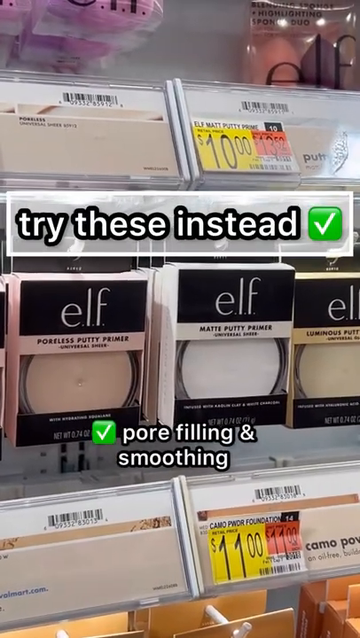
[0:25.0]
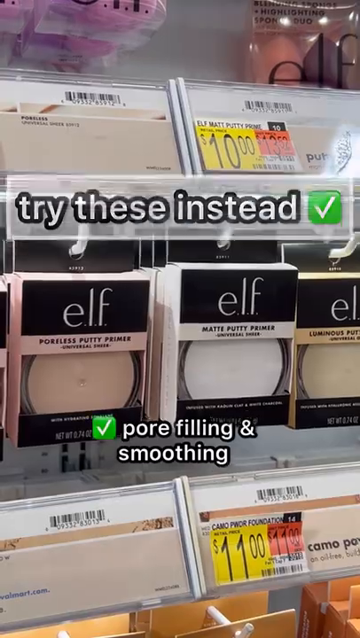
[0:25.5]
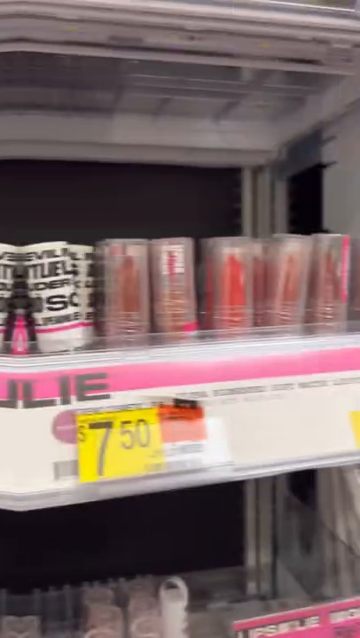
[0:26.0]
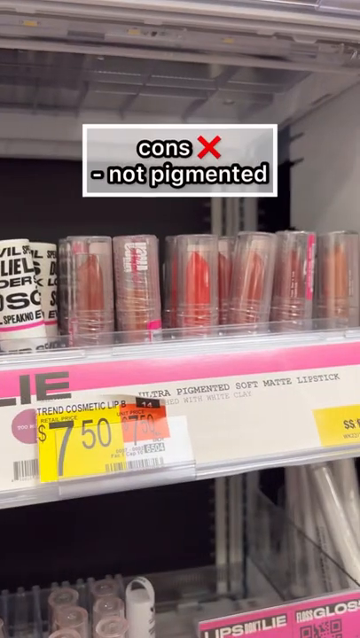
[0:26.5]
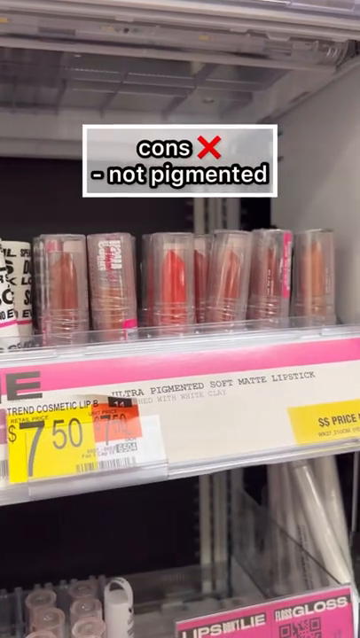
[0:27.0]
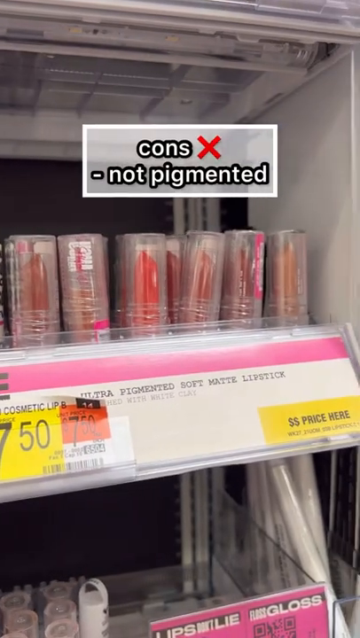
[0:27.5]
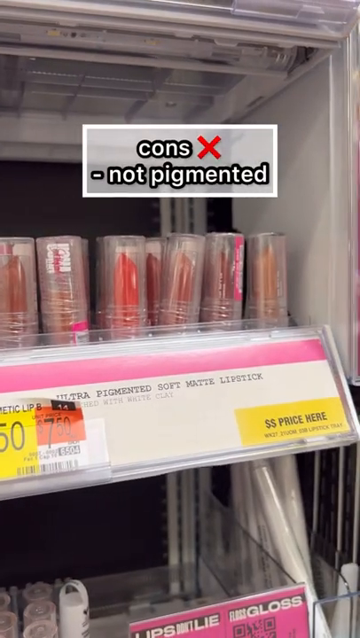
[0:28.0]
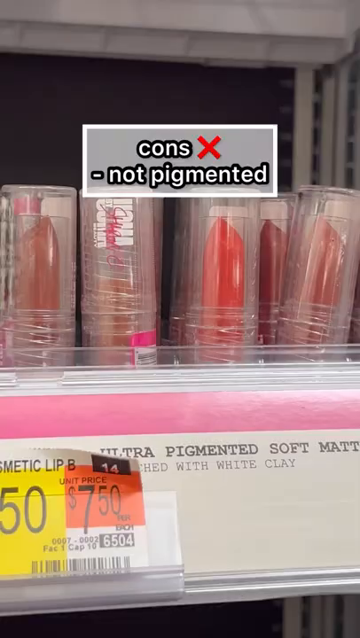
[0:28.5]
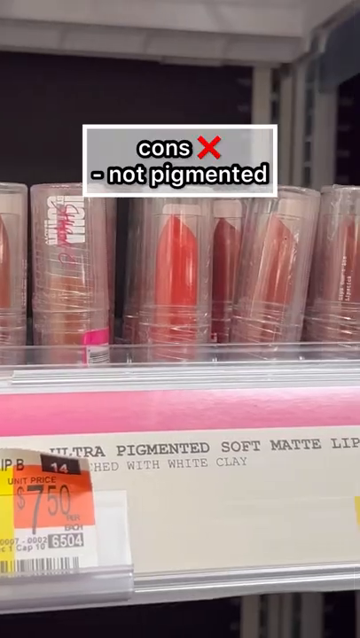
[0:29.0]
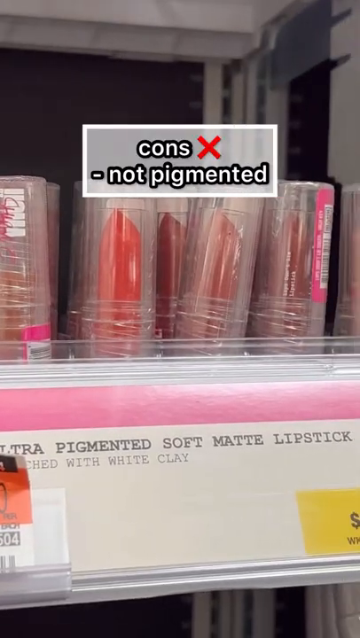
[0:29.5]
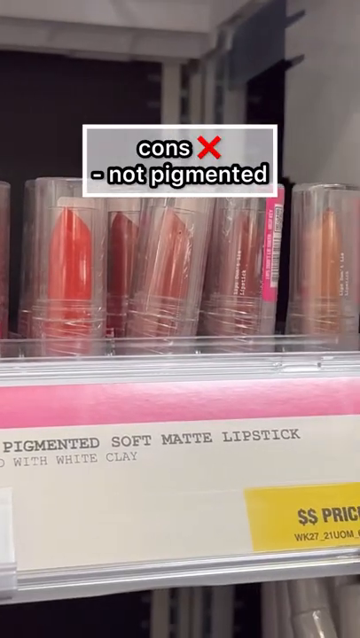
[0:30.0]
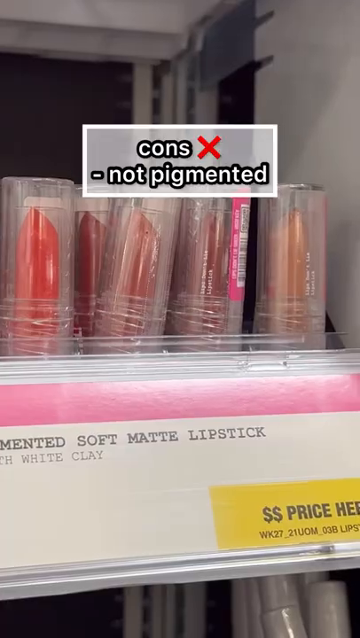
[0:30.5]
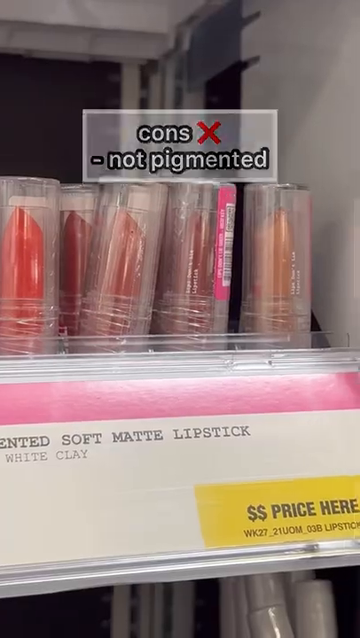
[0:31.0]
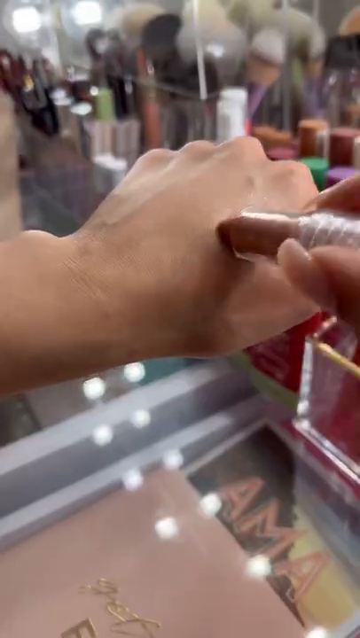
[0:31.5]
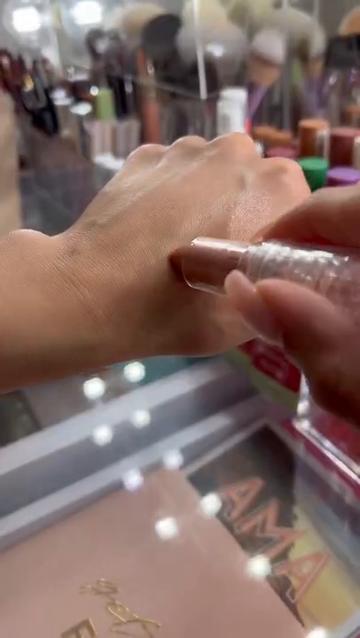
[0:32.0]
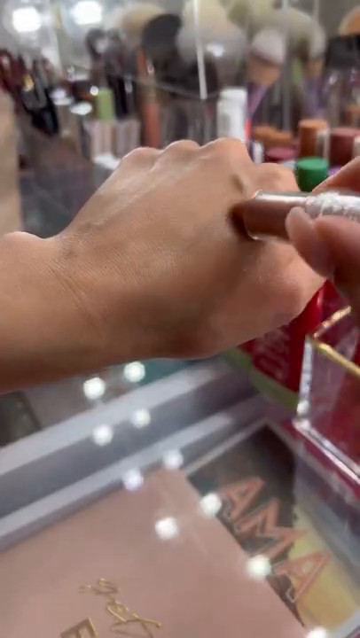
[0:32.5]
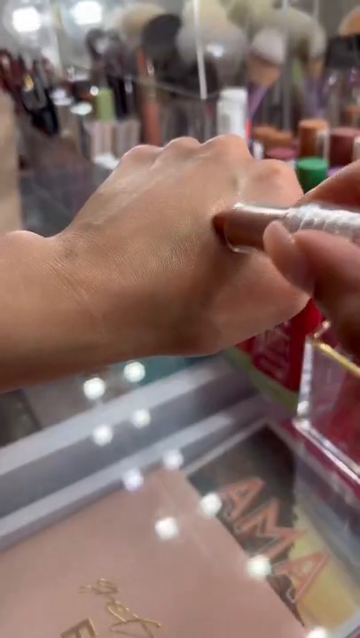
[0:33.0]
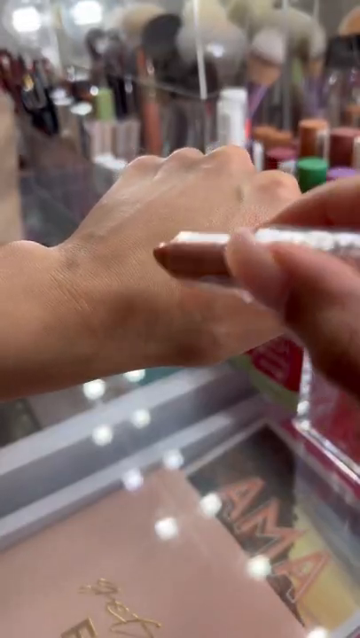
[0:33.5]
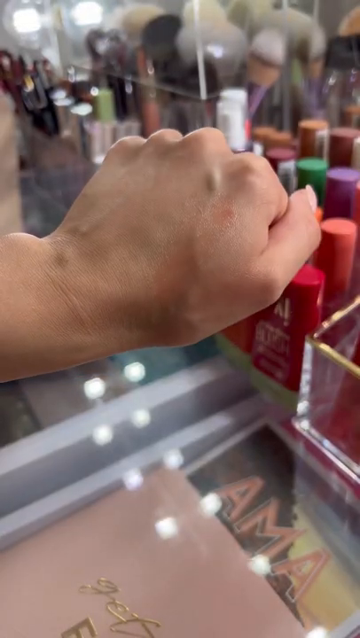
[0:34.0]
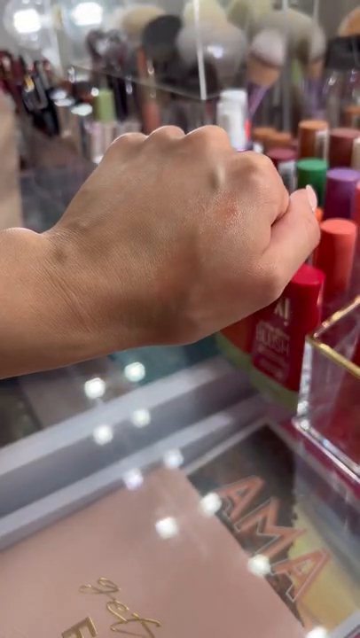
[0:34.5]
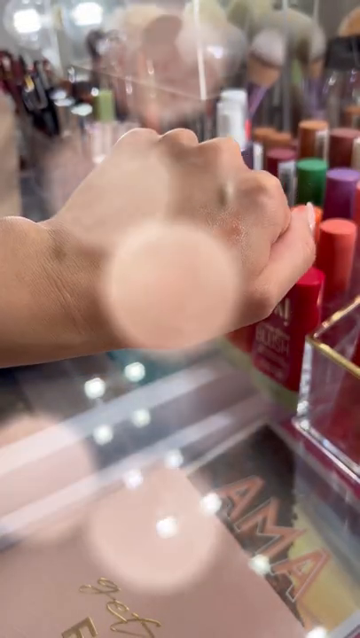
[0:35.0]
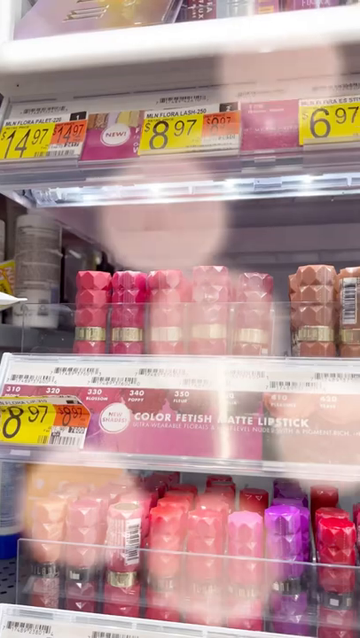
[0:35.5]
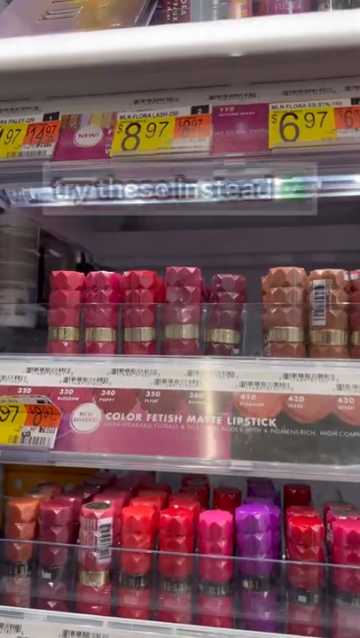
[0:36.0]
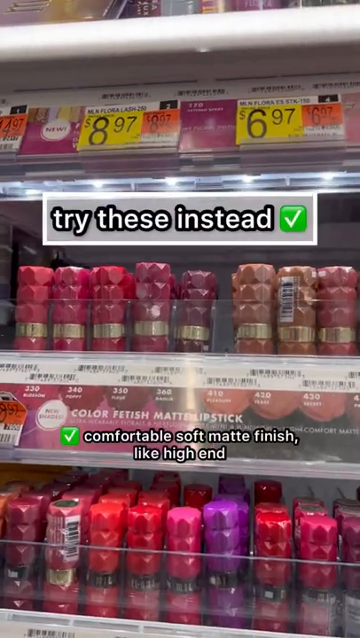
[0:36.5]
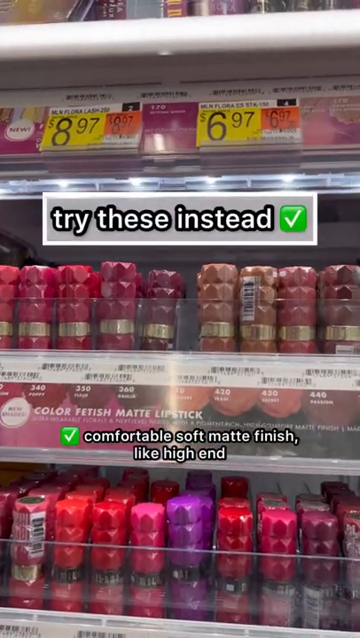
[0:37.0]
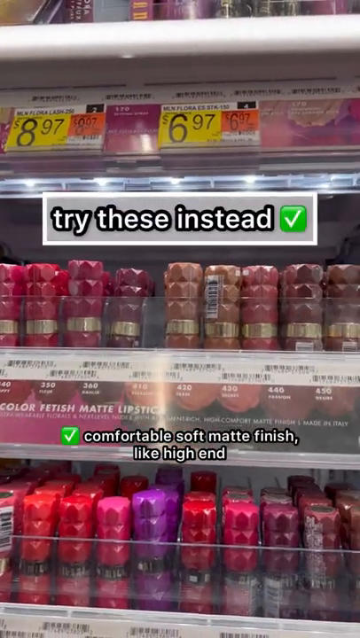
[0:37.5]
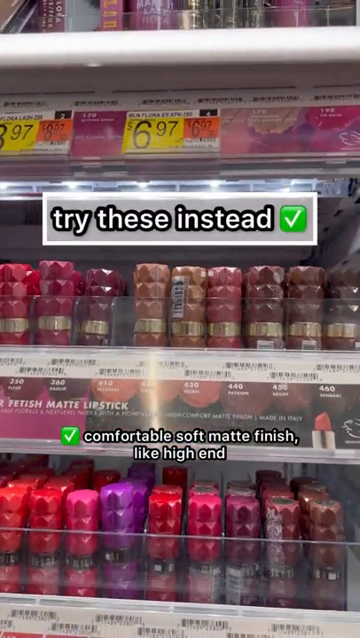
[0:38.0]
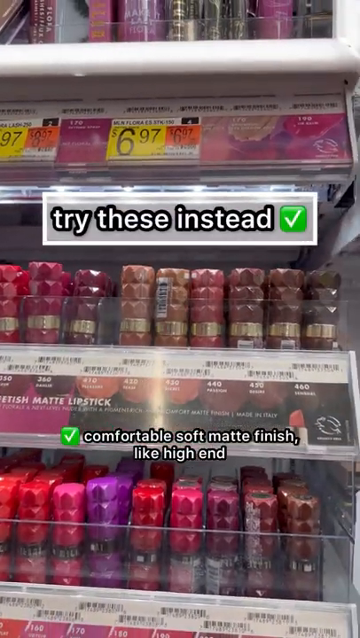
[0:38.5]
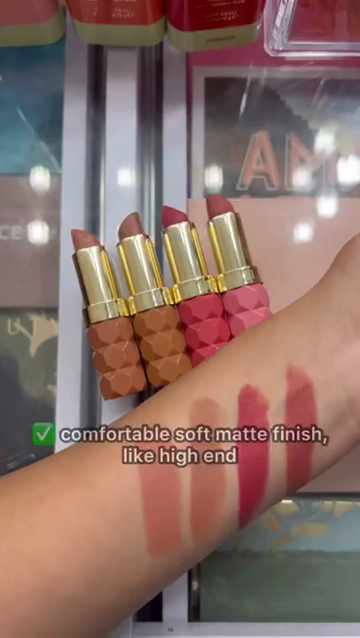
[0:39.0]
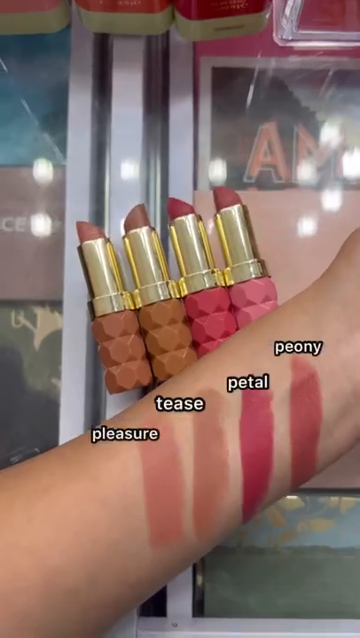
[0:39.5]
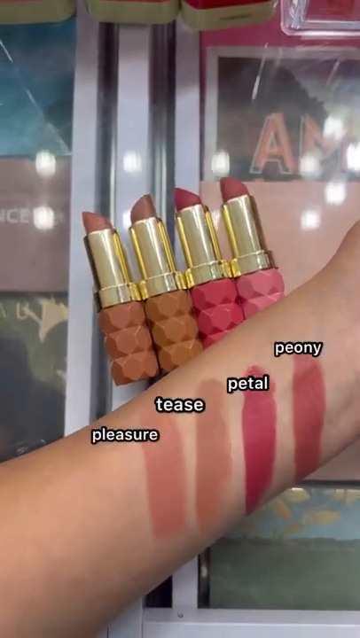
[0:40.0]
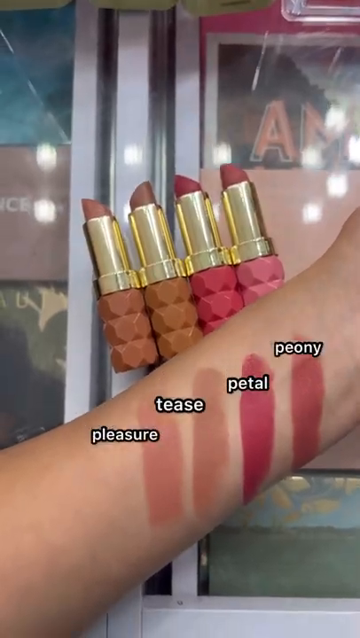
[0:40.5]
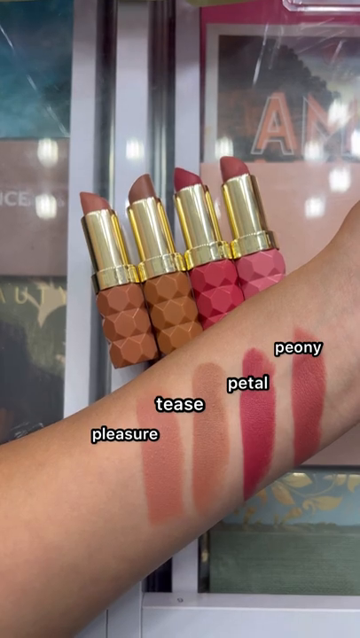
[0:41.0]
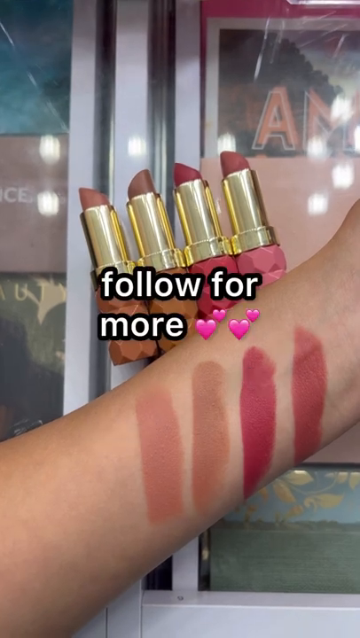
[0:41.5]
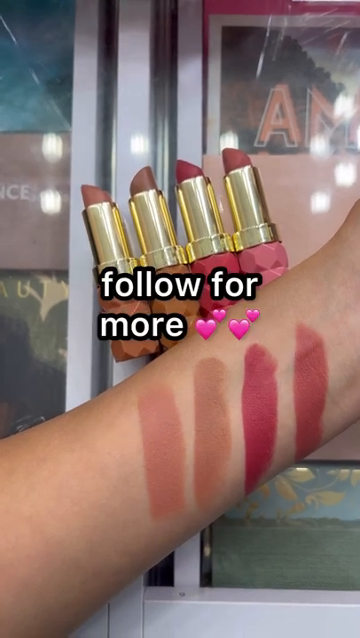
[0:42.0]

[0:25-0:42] This part focuses on drugstore lipsticks or lip stains that are not worth the money. A group of lipsticks appears, and text reads "cons" with an X and "not pigmented." A Caucasian hand is shown as the lipstick is drawn back and forth across the girl's fist, leaving no color. A different brand of lipstick is then shown in a variety of colors, with a heavily textured casing around the lipstick. Four lipstick swatches appear on a Caucasian arm, presented as the ones to try instead, each with a clearly strong color. The text mentions a comfortable soft matte finish and the shades Pleasure, Tease, Petal, and Peony. No brand name is clearly shown for either the con or the pro product.